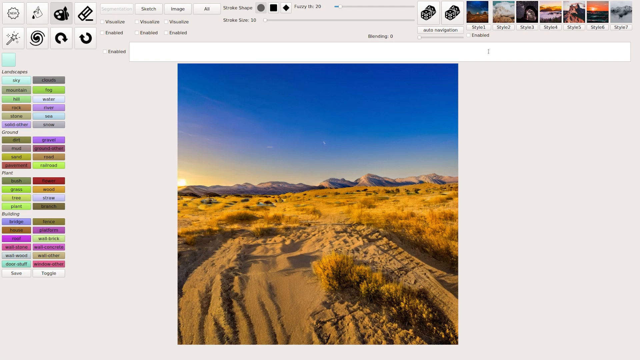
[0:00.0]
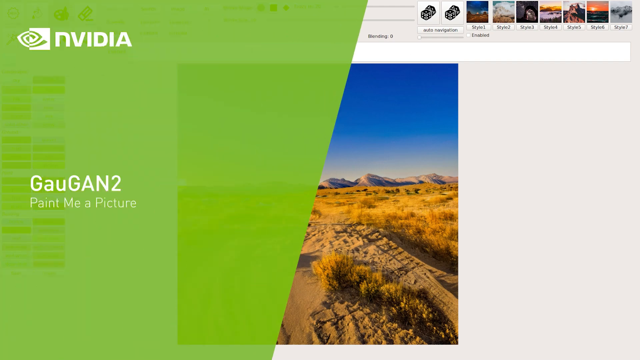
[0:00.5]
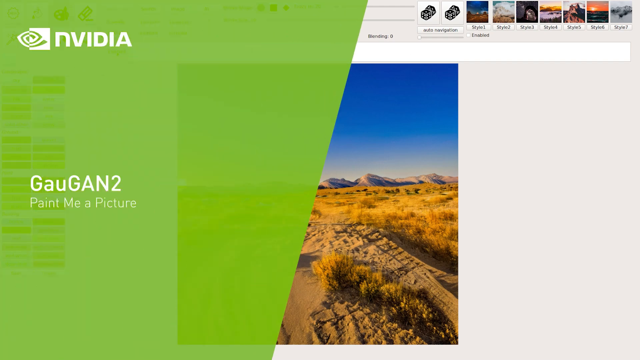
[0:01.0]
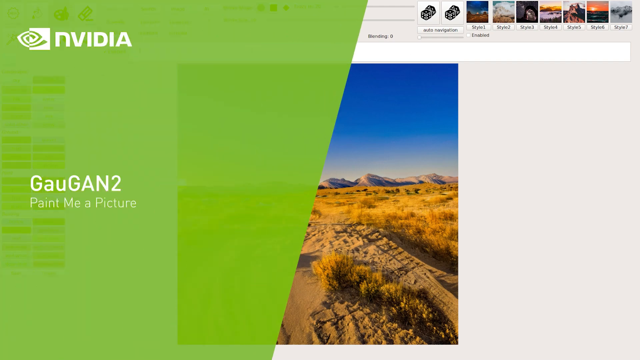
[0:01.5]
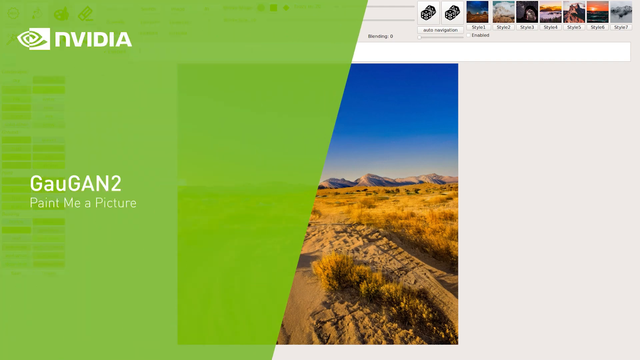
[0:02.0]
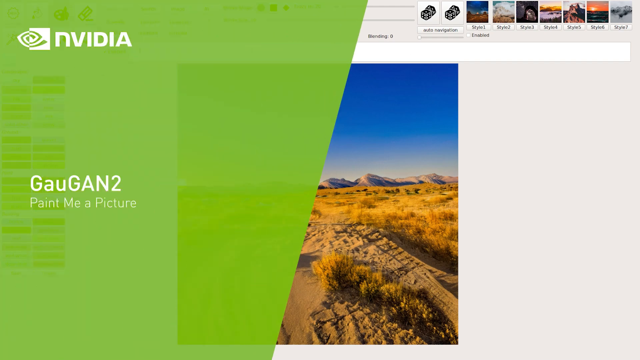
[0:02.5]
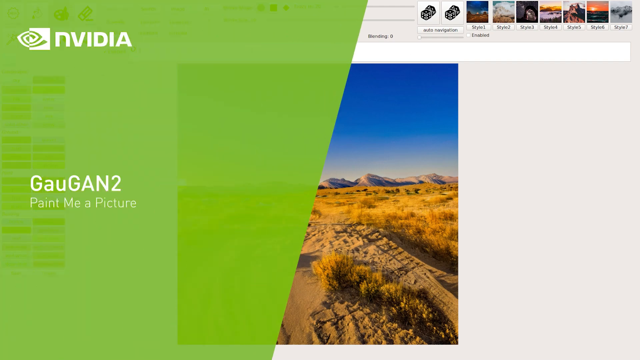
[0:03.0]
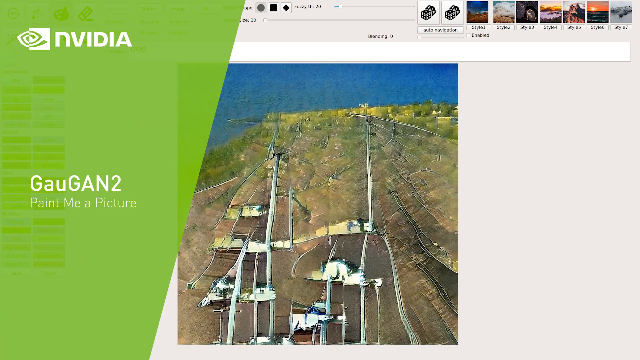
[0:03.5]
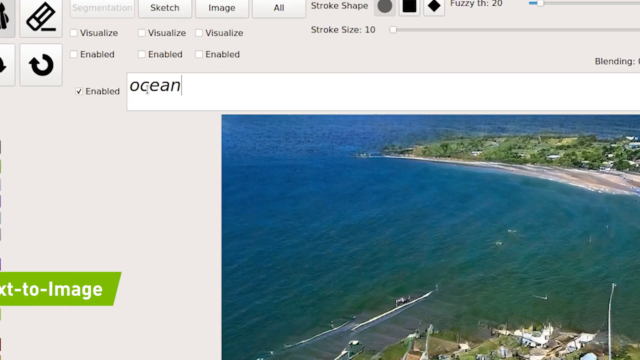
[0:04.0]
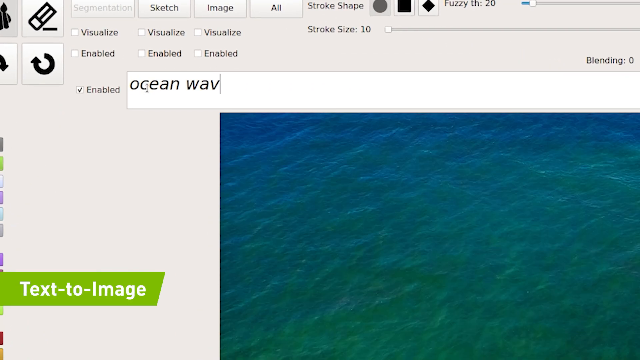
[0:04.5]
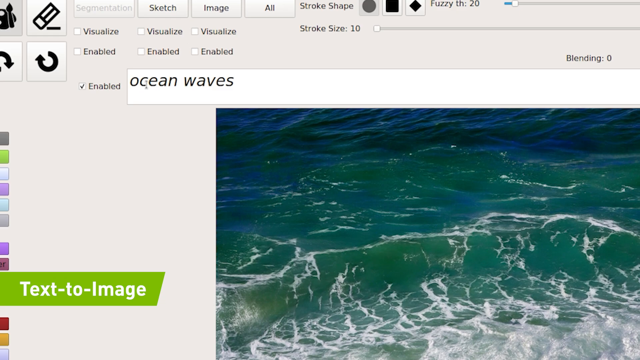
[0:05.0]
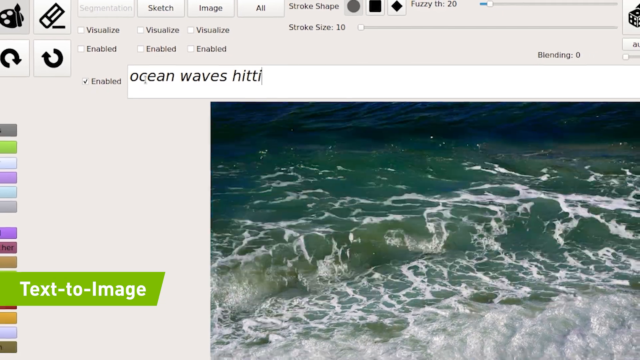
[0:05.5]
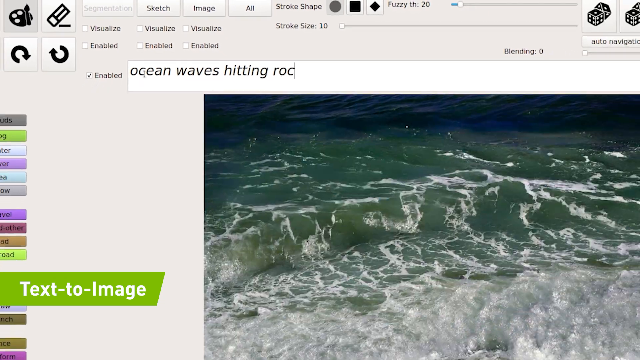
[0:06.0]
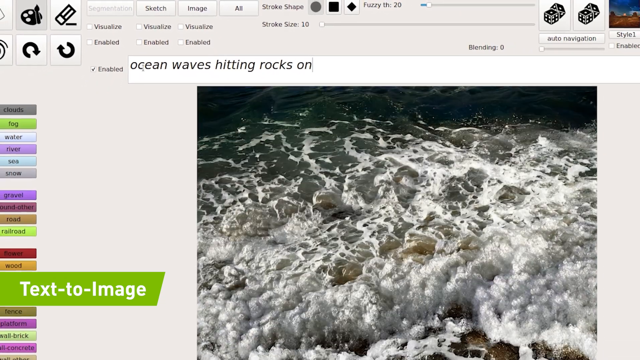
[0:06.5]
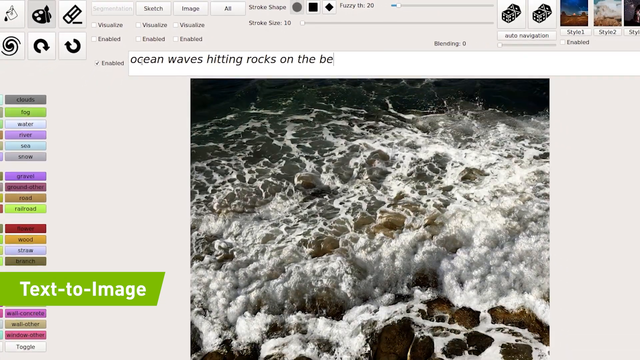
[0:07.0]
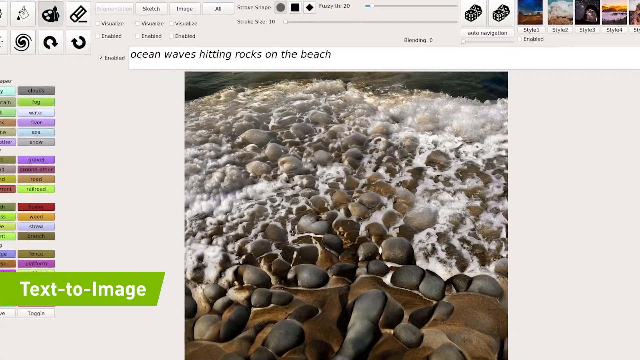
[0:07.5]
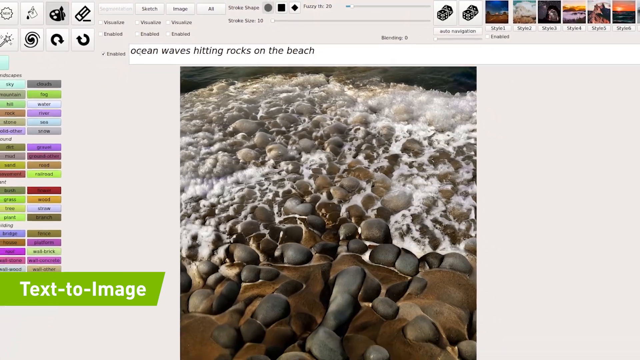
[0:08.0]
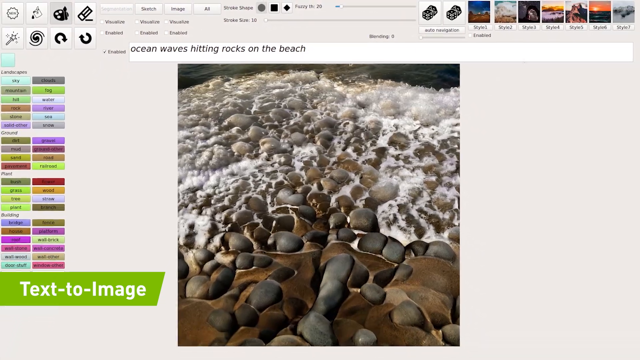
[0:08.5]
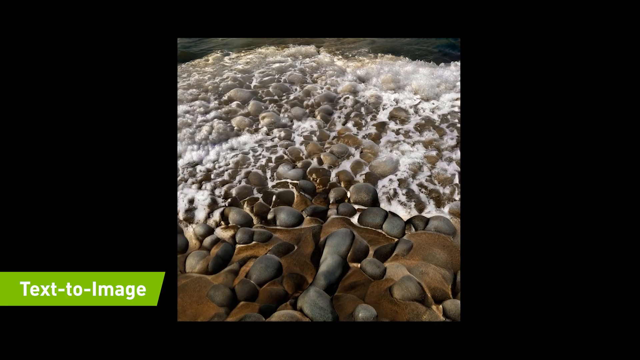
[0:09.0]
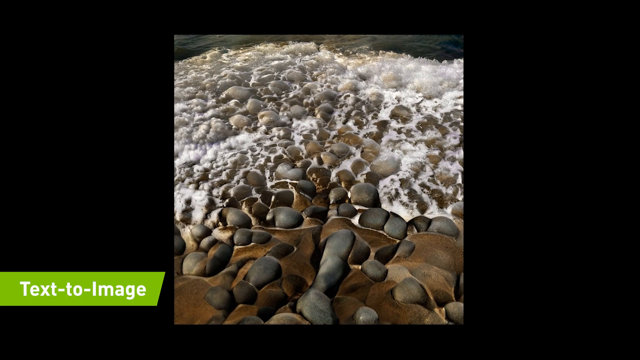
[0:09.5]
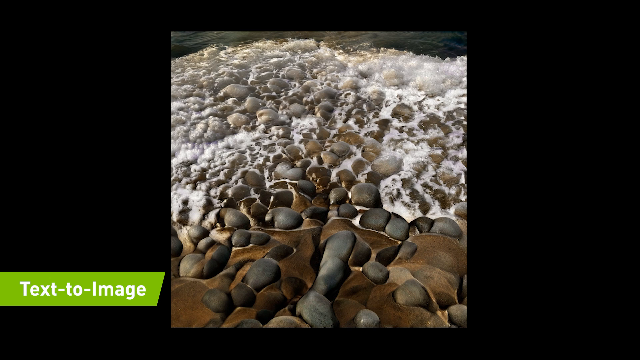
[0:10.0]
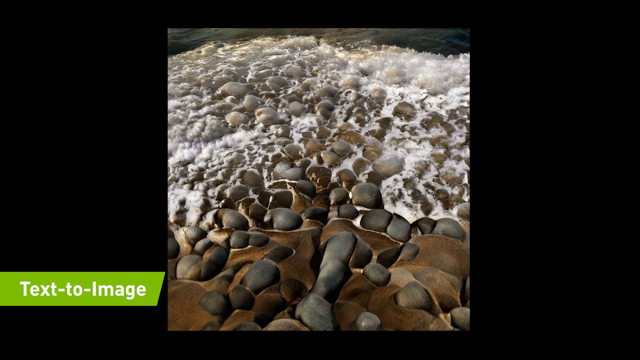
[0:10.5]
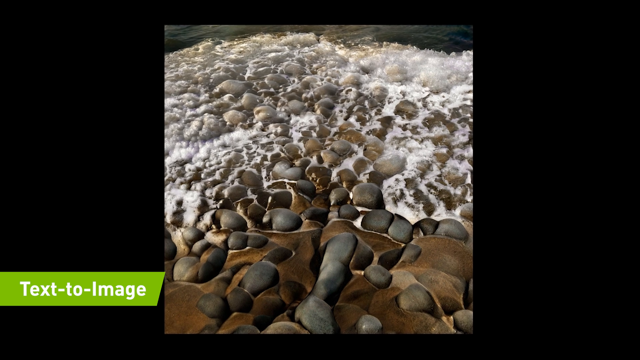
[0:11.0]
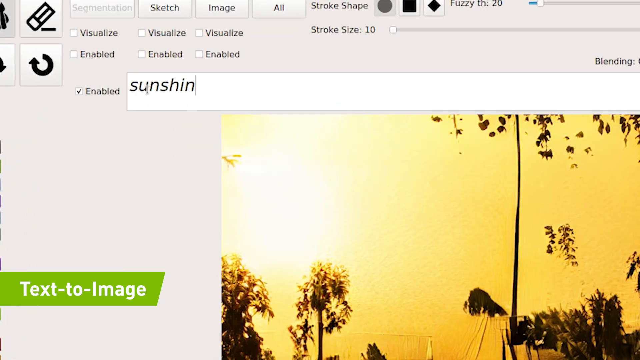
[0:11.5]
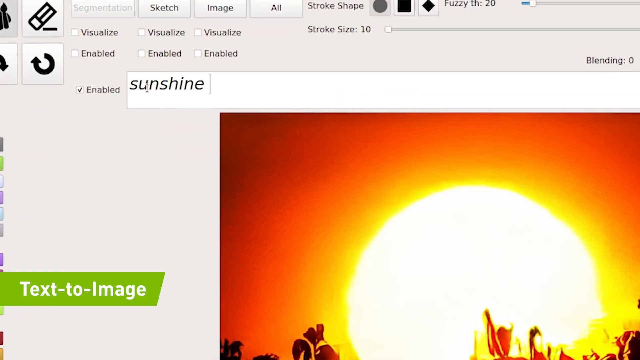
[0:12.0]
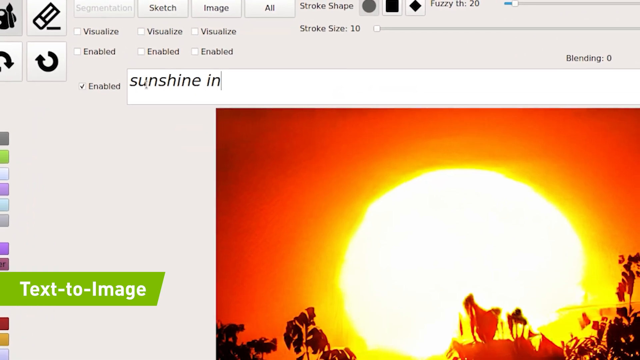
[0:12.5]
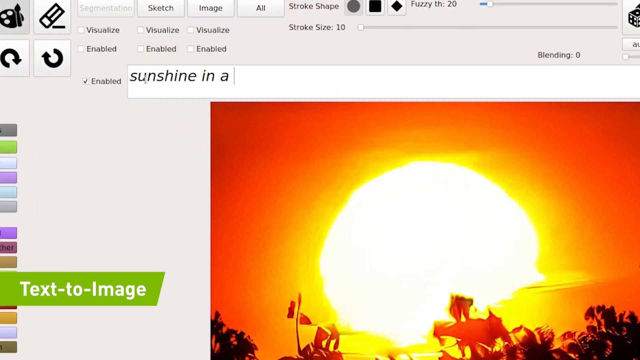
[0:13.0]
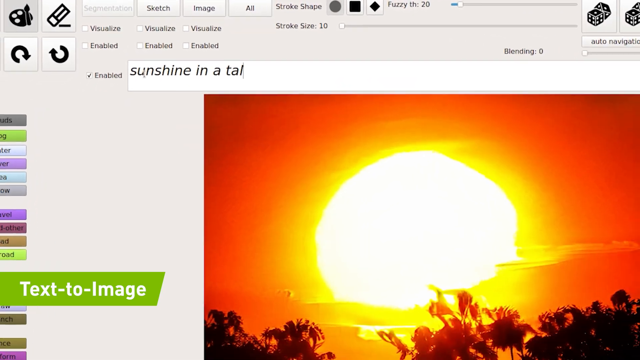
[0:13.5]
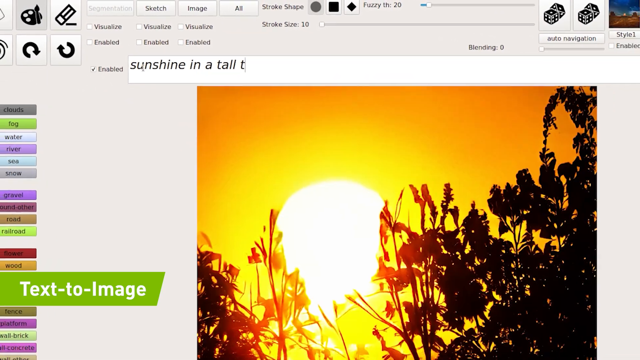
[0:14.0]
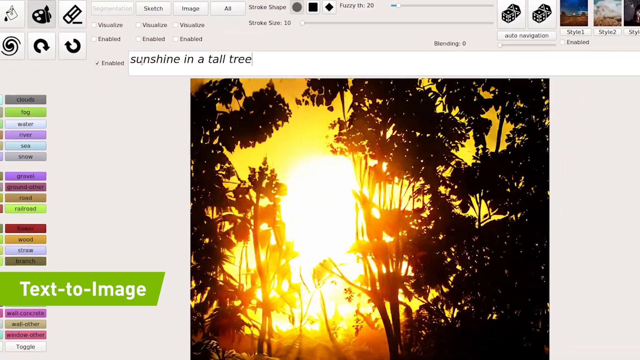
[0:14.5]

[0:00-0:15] The video appears to be by NVIDIA and seems to demonstrate an AI text-to-image technology, where typed text is turned into a picture. The text "ocean waves hitting rocks on the beach" is typed in, and it is turned into a very clear and vivid image. Another example follows, with "sunshine in a tall tree" being typed.